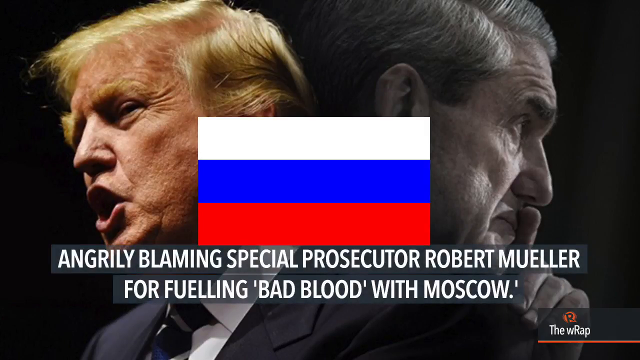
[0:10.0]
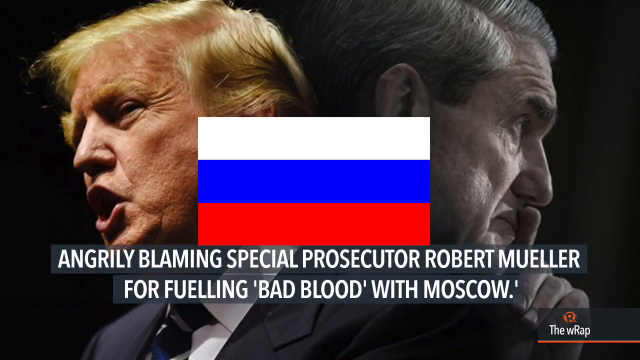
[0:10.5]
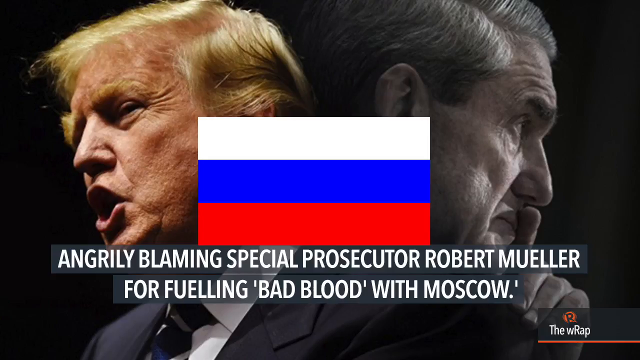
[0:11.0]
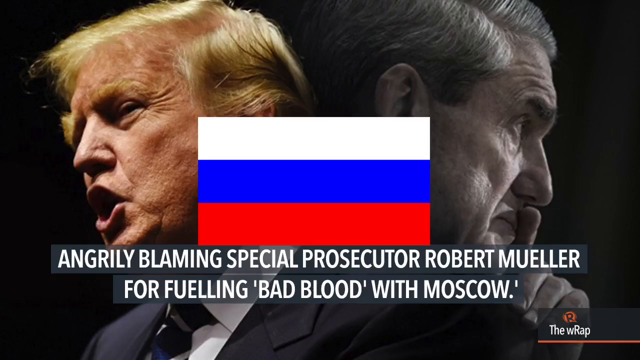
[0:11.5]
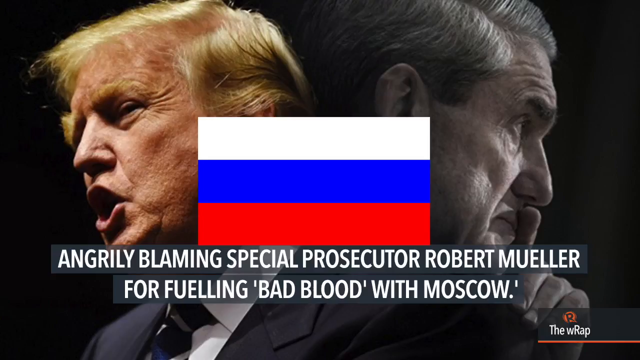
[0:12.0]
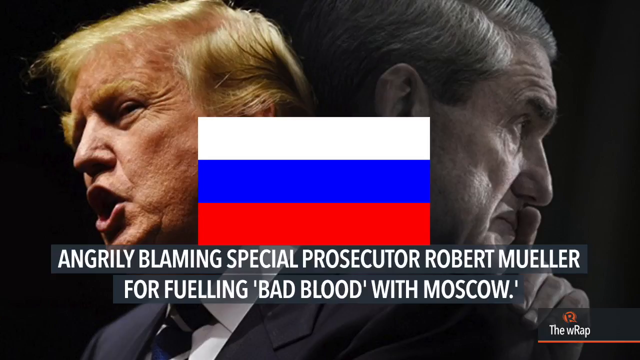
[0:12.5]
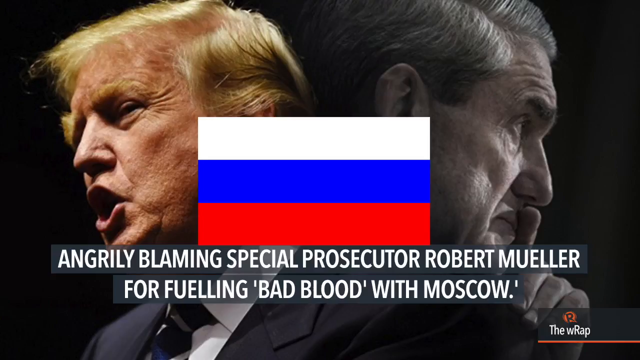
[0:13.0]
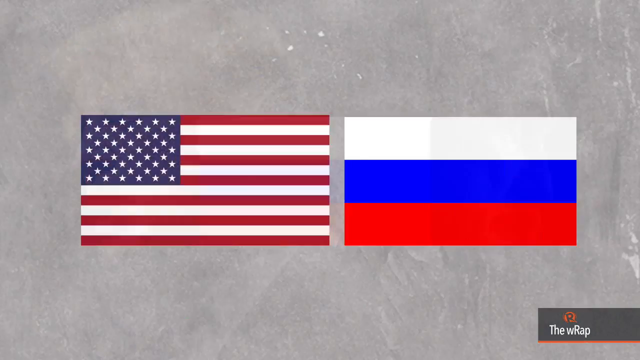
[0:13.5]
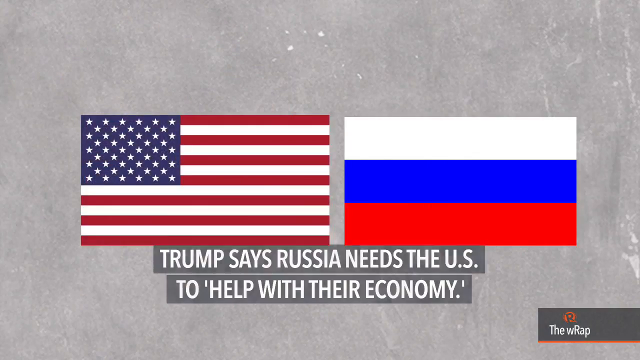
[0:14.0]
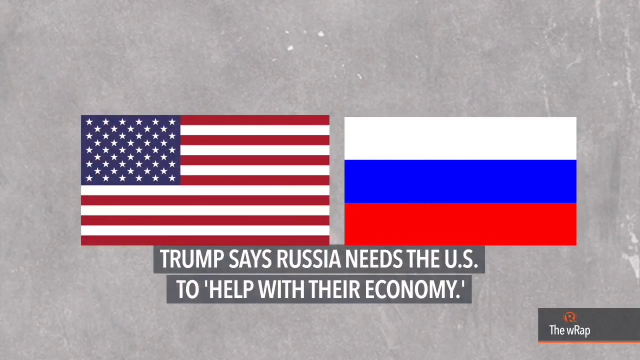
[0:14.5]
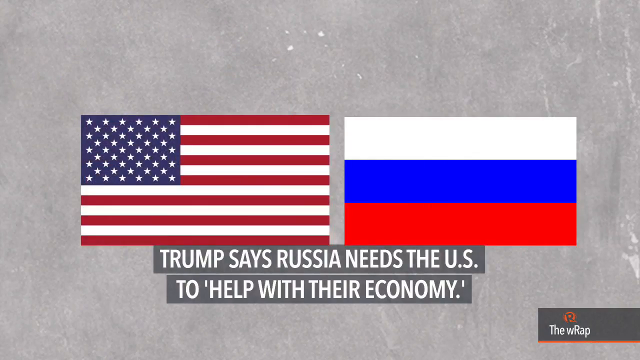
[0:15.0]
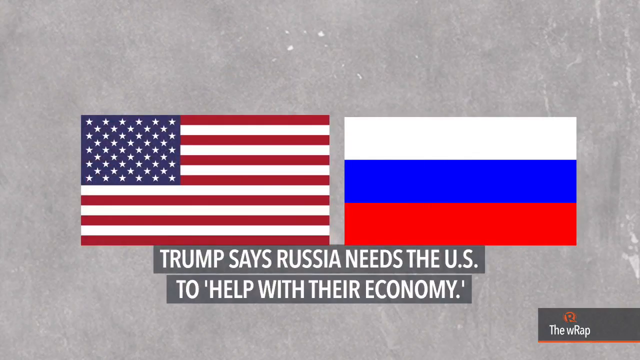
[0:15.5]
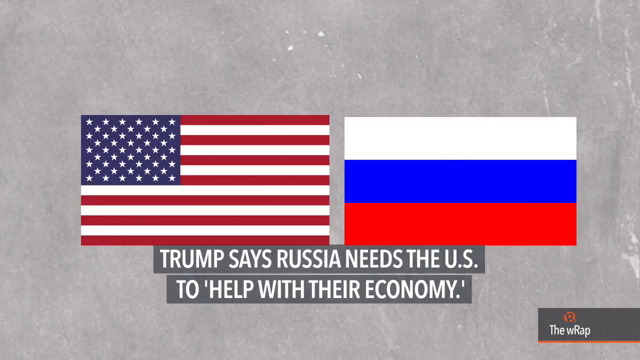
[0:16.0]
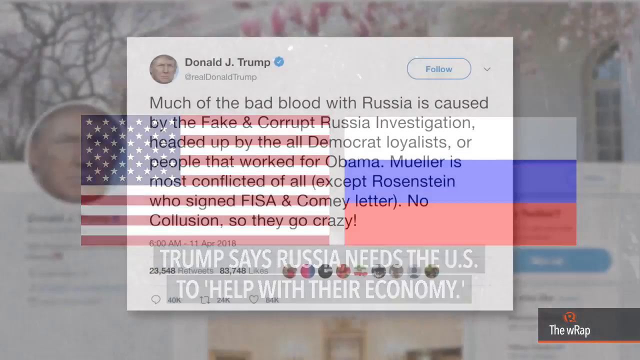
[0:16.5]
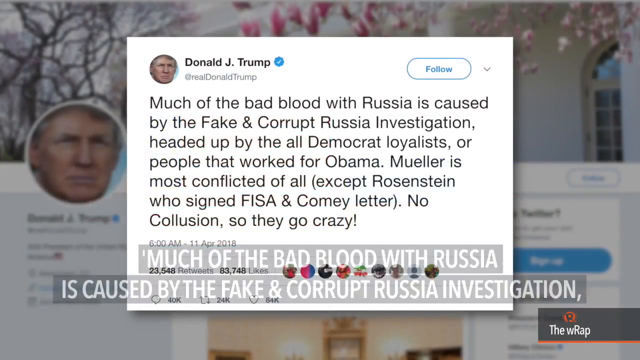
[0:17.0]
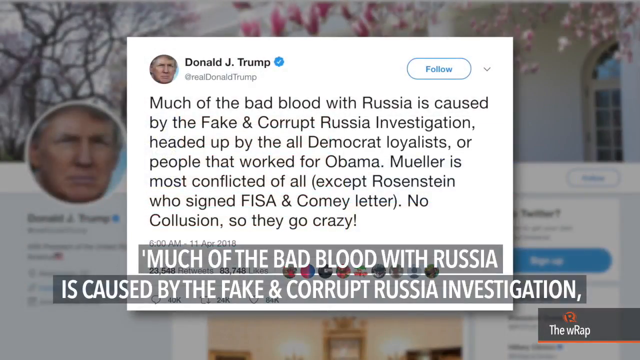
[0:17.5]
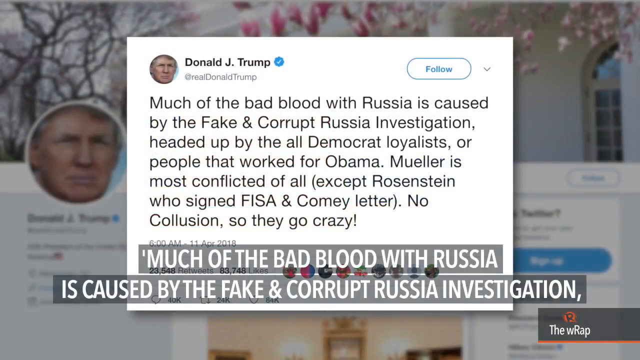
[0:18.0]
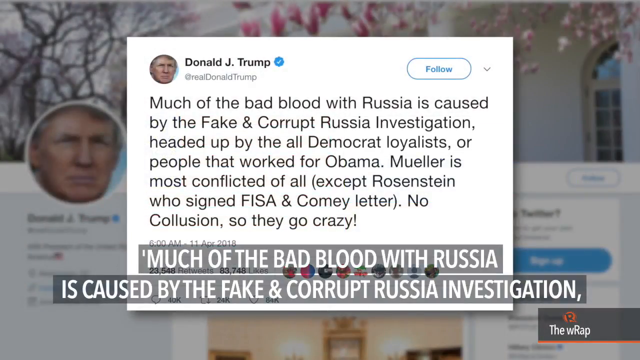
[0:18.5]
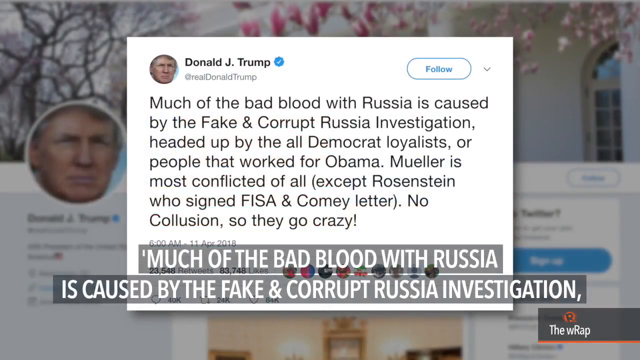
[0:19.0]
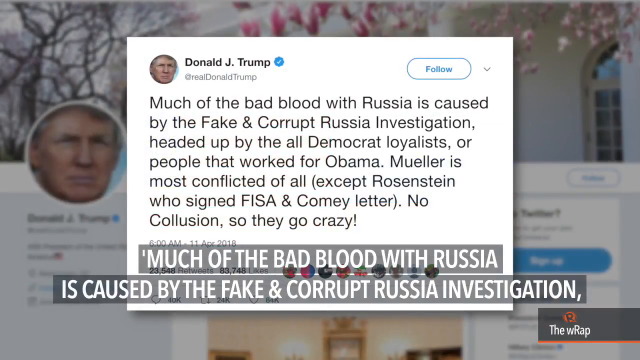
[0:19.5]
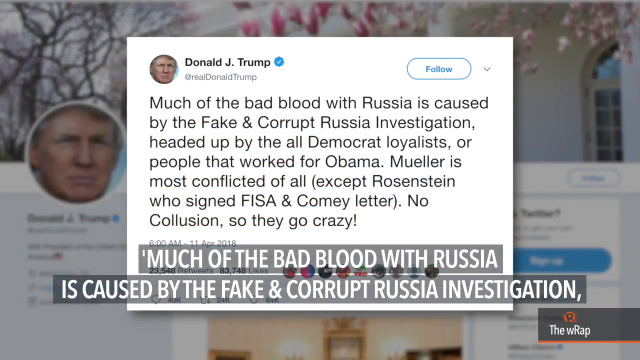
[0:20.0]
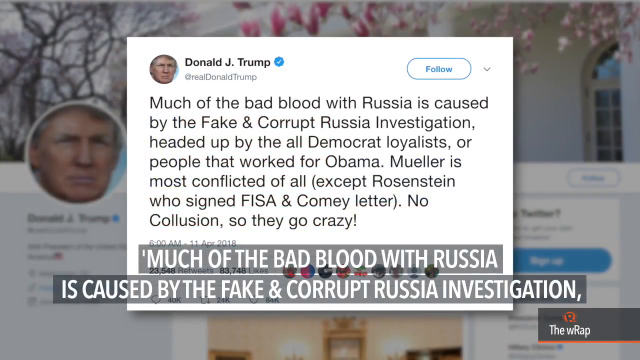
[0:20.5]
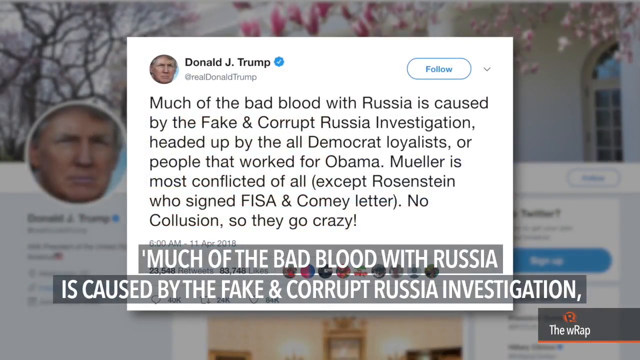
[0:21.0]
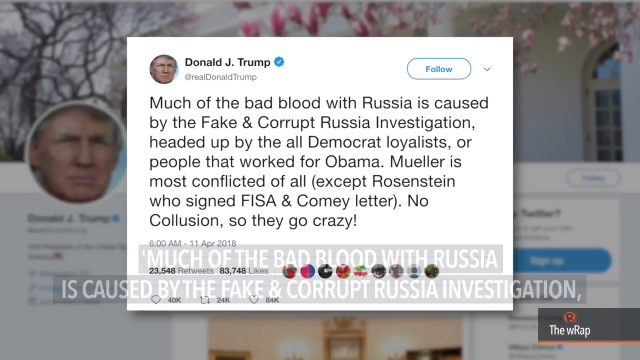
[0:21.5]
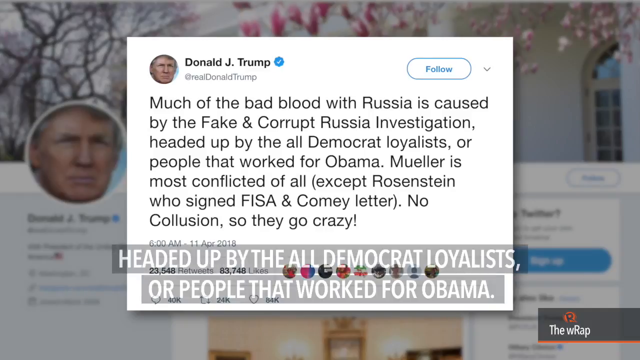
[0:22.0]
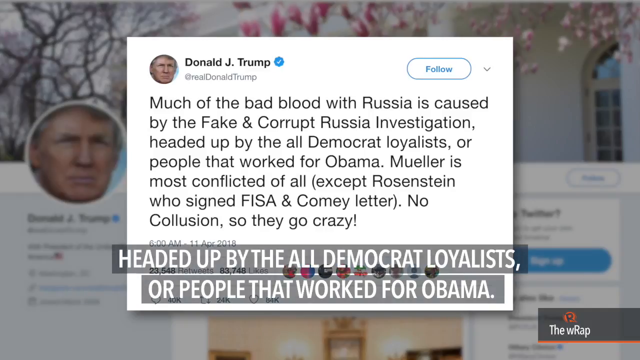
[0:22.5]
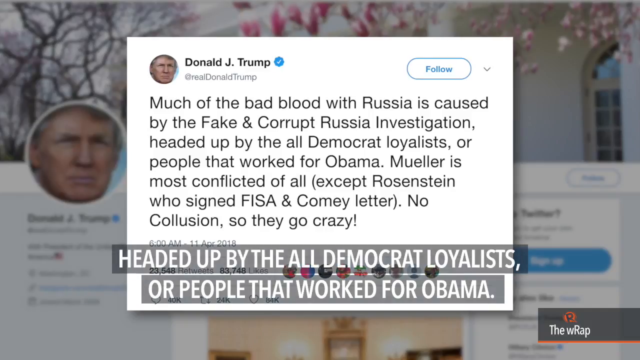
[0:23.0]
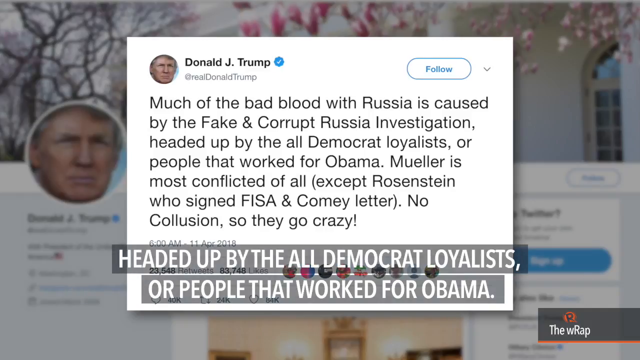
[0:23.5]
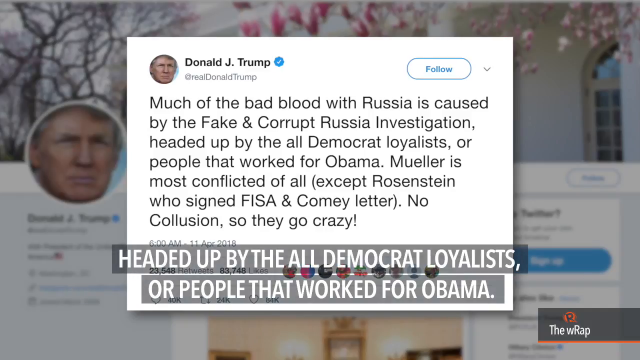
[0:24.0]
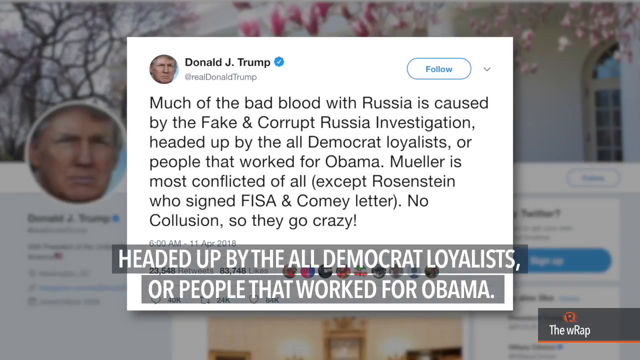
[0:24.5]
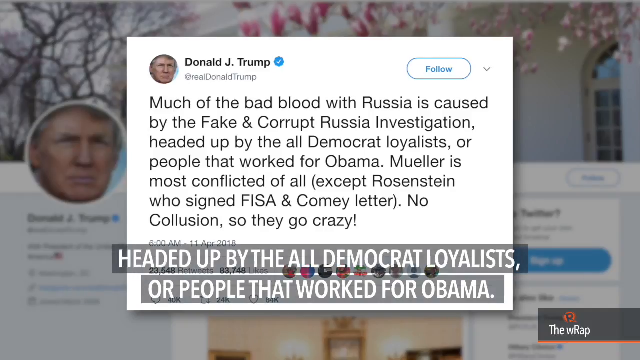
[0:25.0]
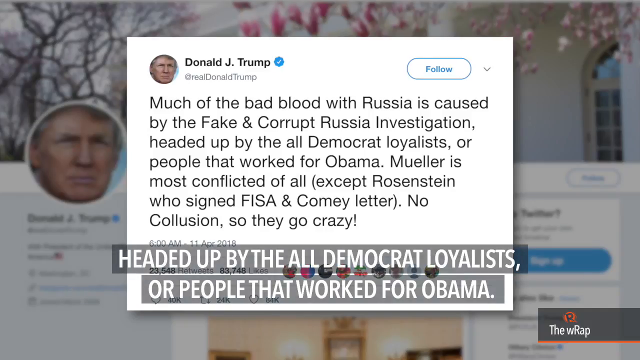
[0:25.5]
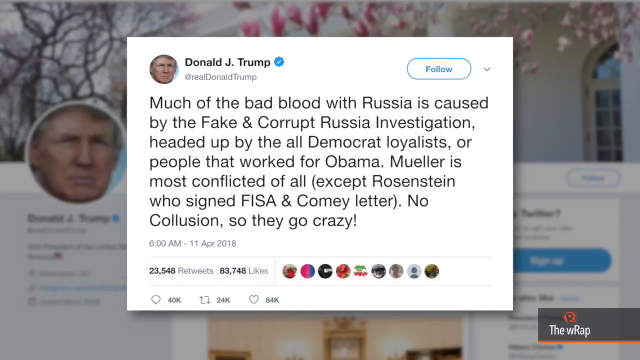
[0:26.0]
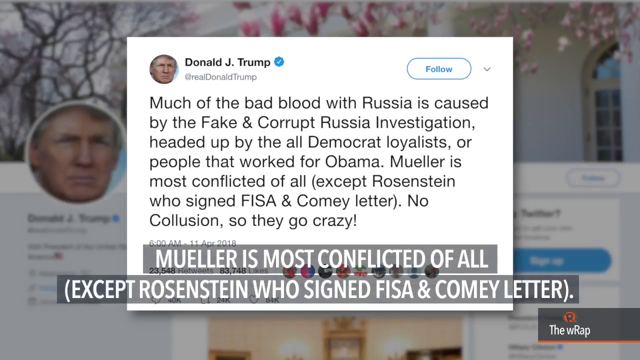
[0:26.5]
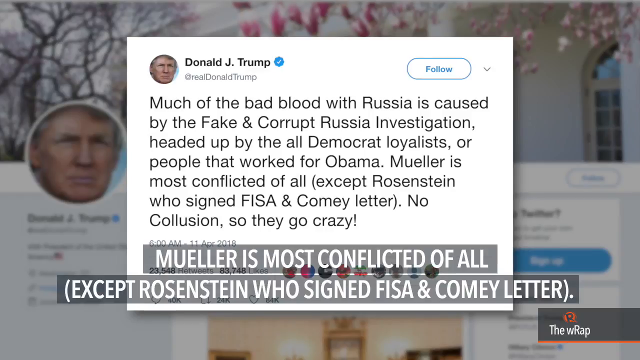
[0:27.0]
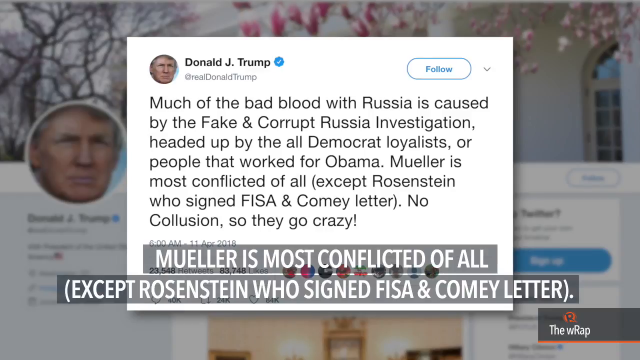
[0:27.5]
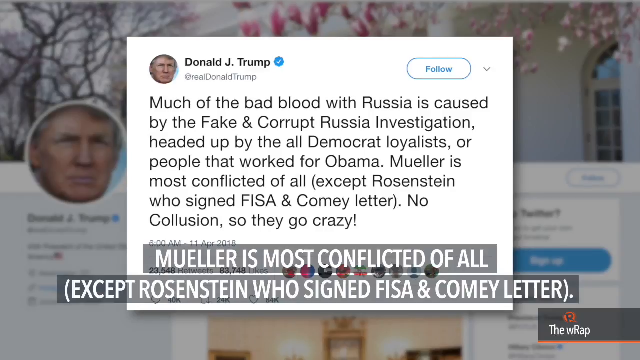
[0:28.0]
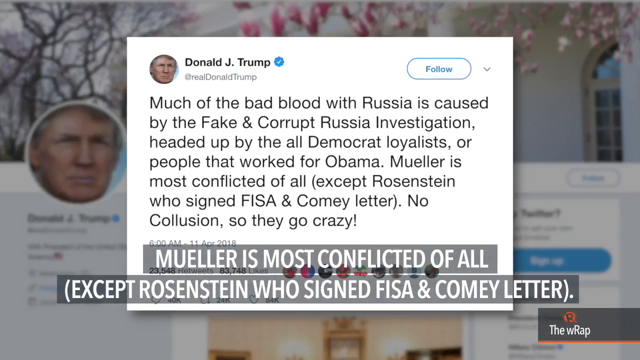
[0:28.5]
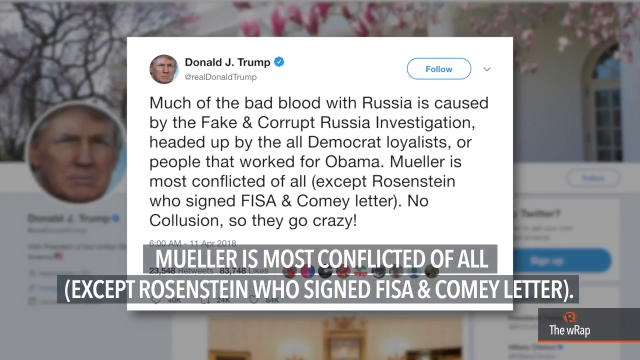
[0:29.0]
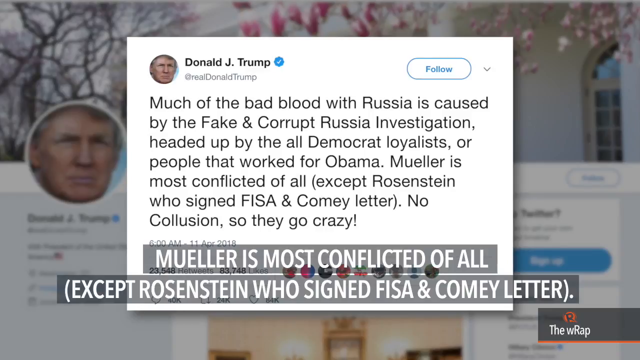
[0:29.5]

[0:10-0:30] The photo of Trump facing to the right, with the man to the left, stays on screen for a moment. The screen then changes to a graphic of an American flag on the left and the white, blue and red flag on the right, on a gray background, with text underneath saying "Trump says Russia needs the US to help with their economy". Next the screen switches to a tweet from Donald J Trump in the center of the screen, with Donald J Trump's Twitter profile in the background. The tweet begins "much of the bad blood with Russia is caused by the fake and corrupt Russia" and goes on to say "Mueller is most conflicted of all", mentioning Rosenstein and "FISA" in parentheses, and "no collusion, so they go crazy!" Text at the bottom of the screen says "much of the bad blood with Russia is caused by the fake and corrupt Russia investigation". The screen stays, and the bottom text then changes to "headed up by the all Democrat loyalist", continuing to repeat what is in the tweet.